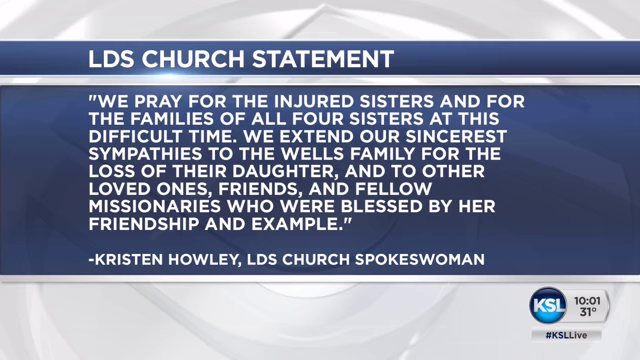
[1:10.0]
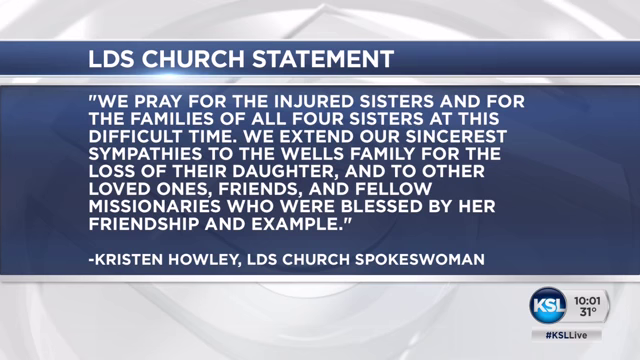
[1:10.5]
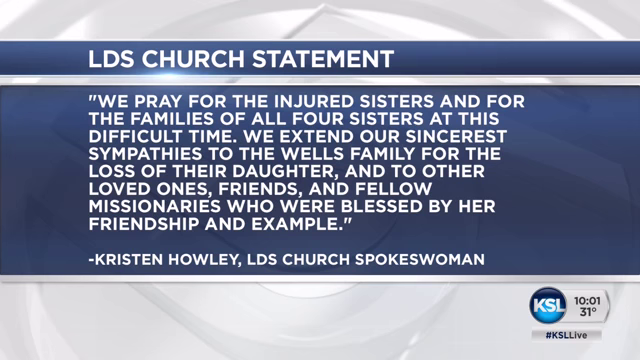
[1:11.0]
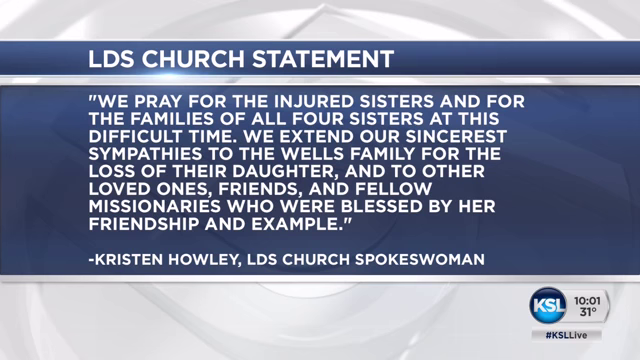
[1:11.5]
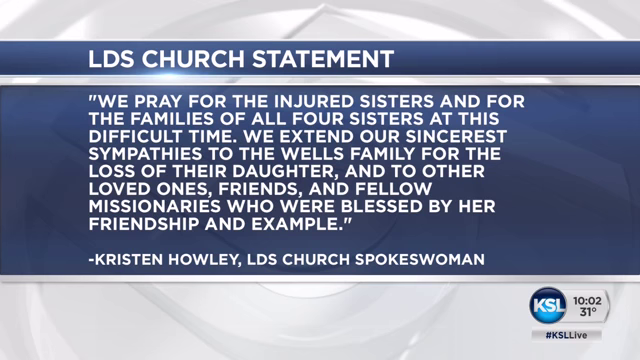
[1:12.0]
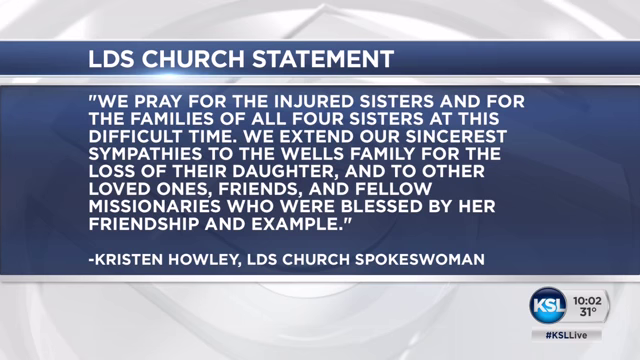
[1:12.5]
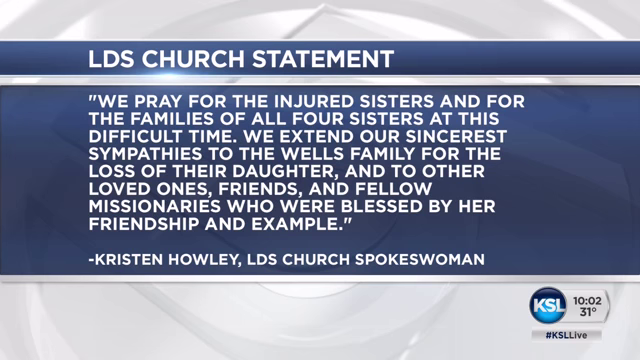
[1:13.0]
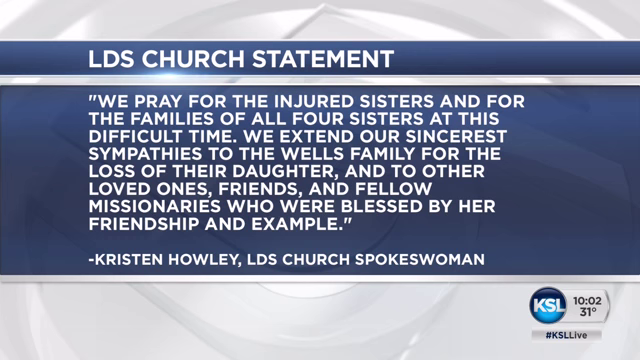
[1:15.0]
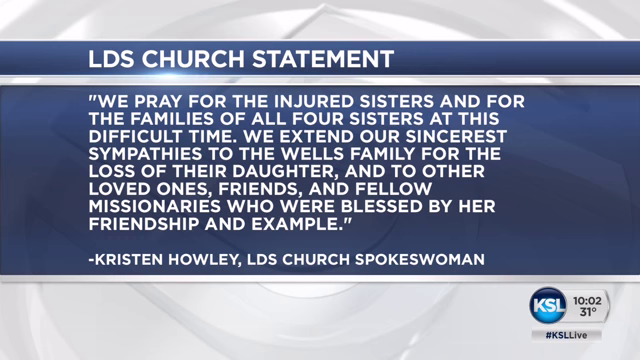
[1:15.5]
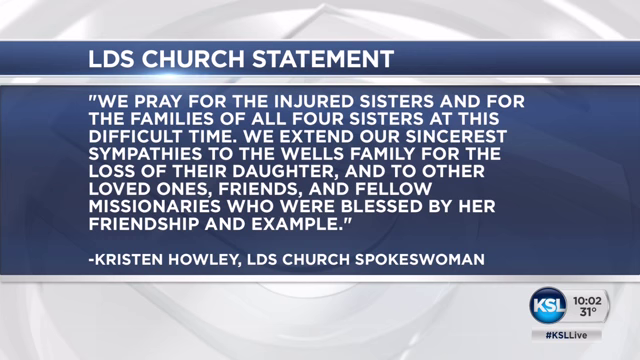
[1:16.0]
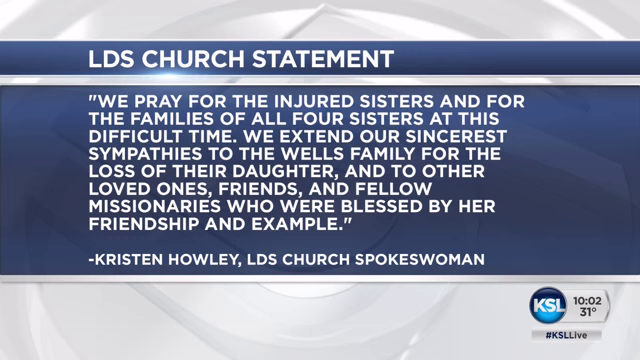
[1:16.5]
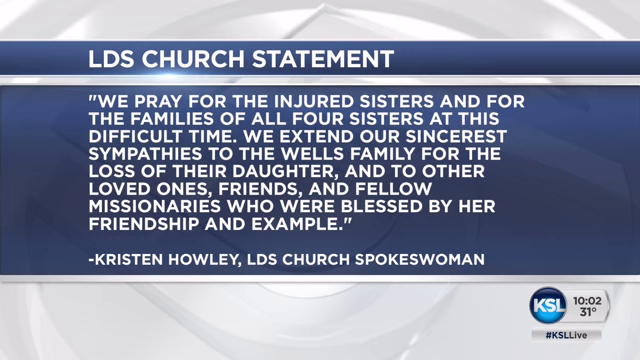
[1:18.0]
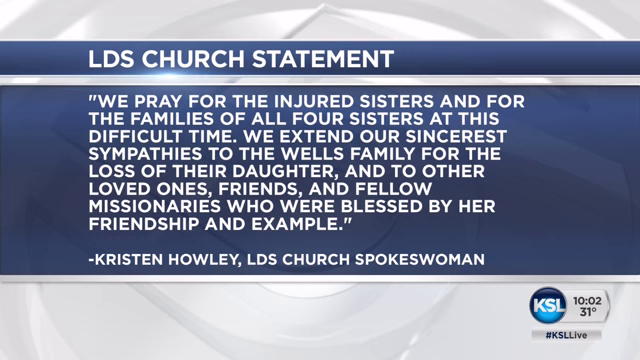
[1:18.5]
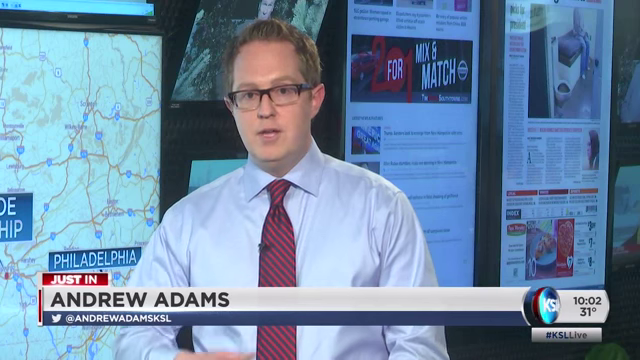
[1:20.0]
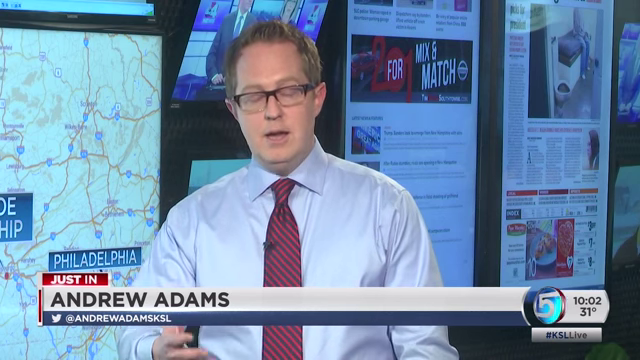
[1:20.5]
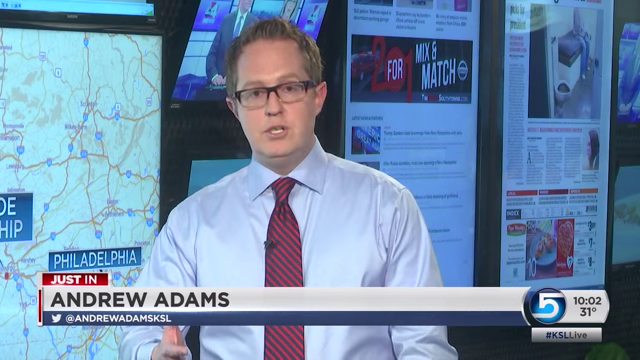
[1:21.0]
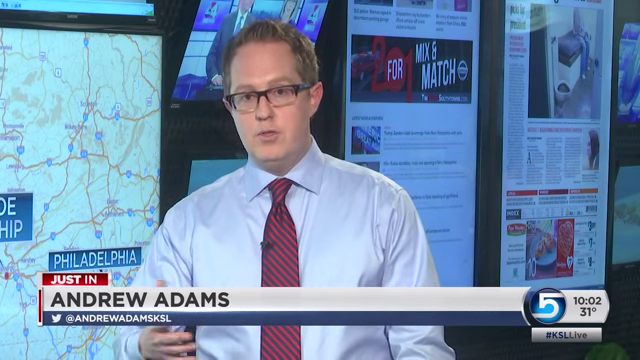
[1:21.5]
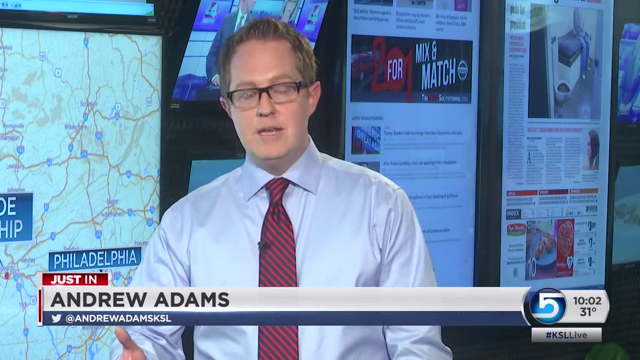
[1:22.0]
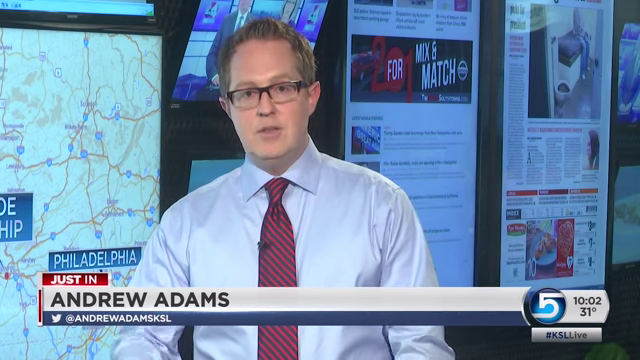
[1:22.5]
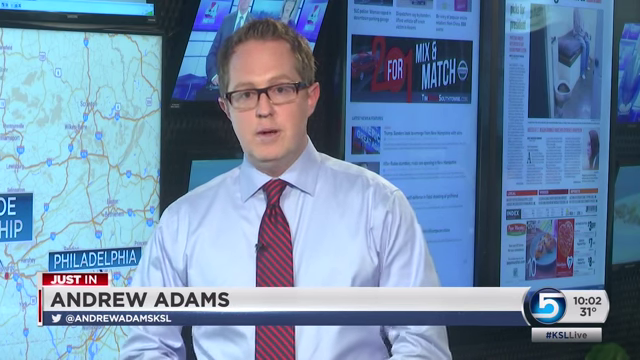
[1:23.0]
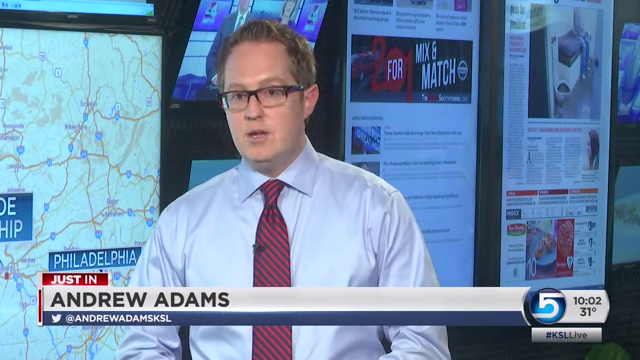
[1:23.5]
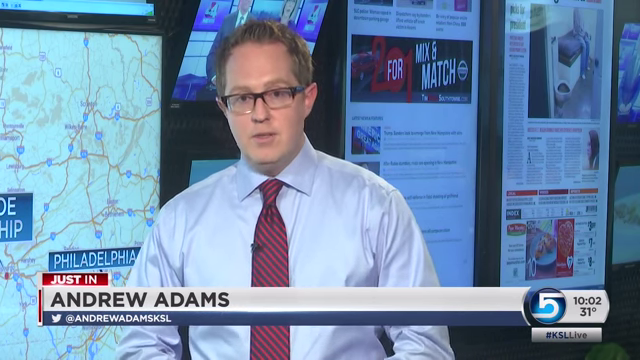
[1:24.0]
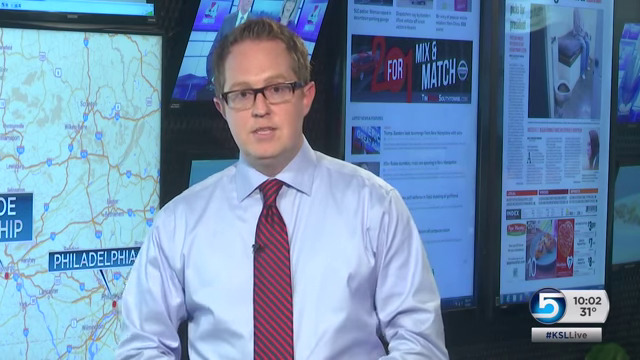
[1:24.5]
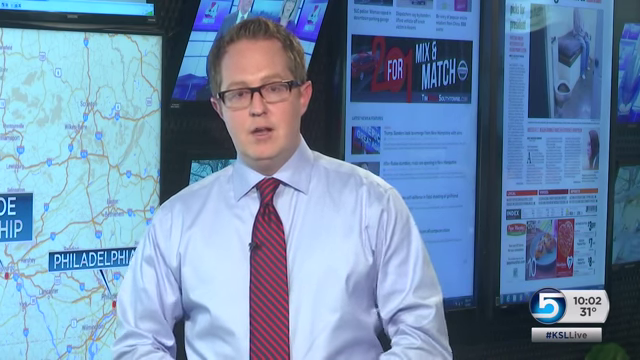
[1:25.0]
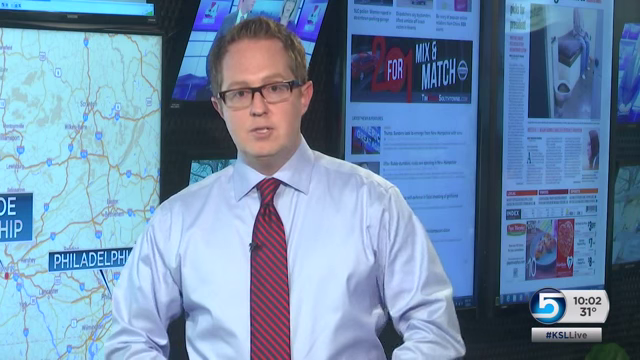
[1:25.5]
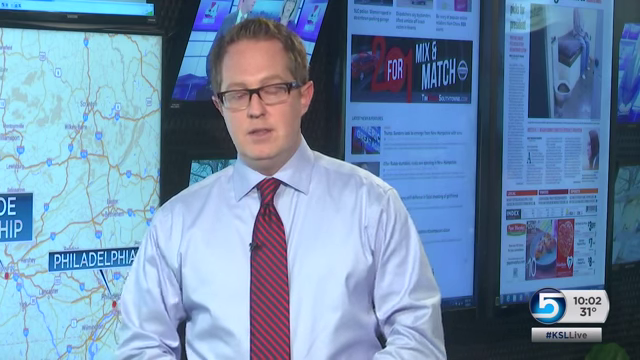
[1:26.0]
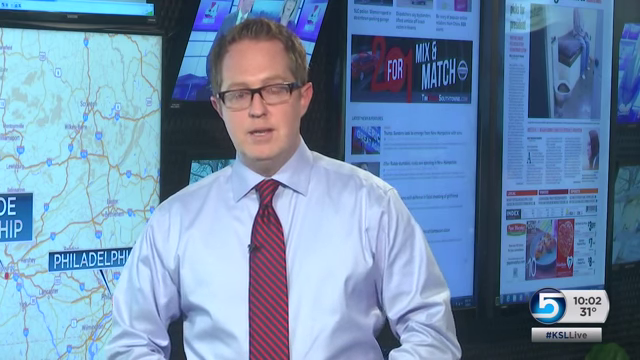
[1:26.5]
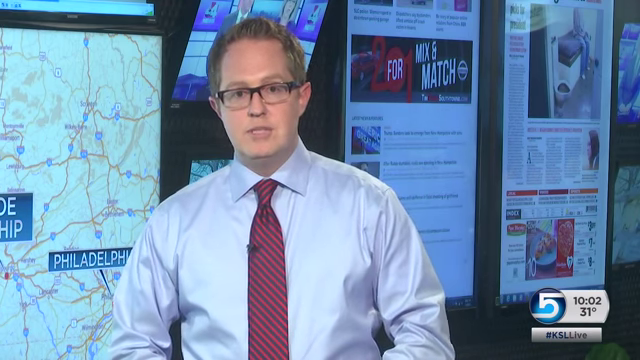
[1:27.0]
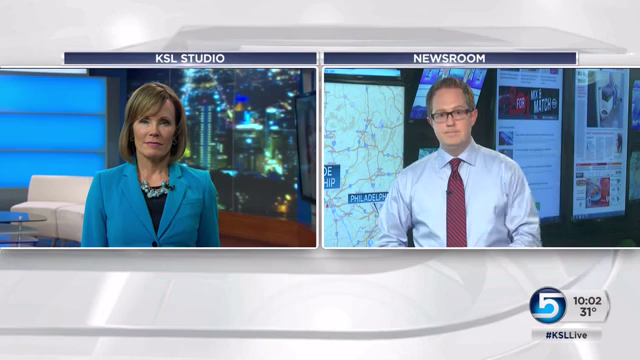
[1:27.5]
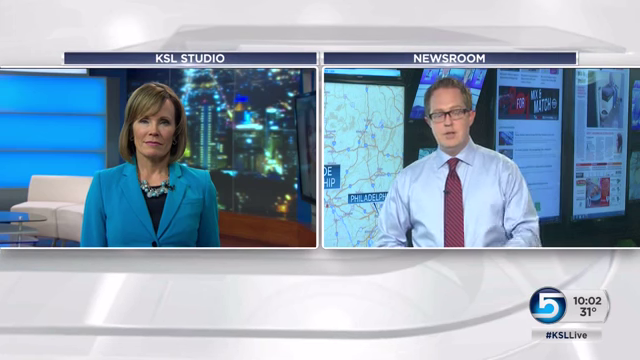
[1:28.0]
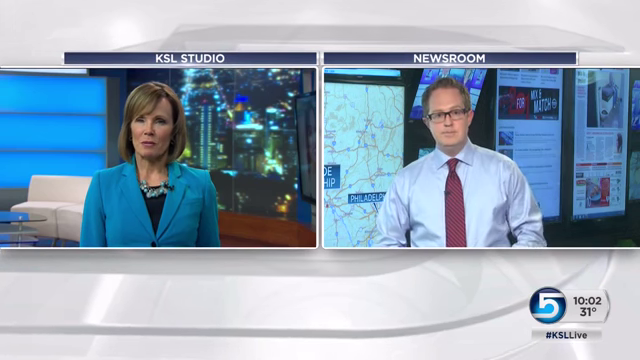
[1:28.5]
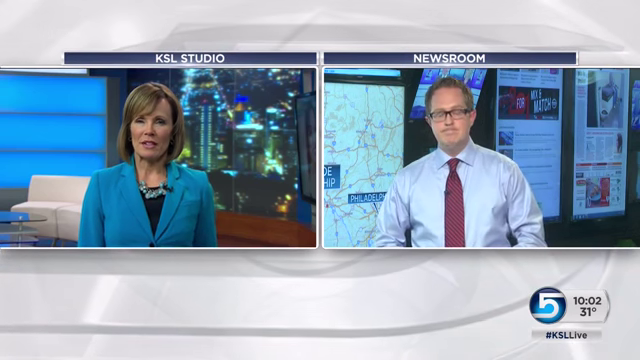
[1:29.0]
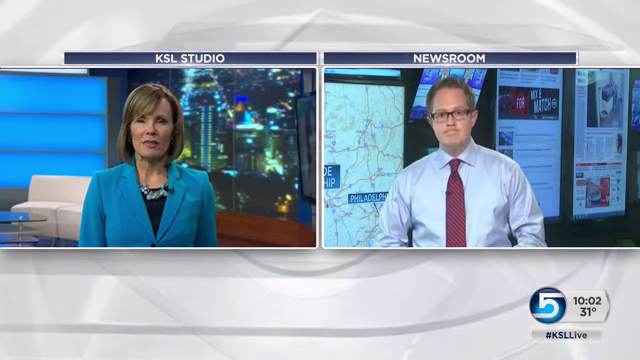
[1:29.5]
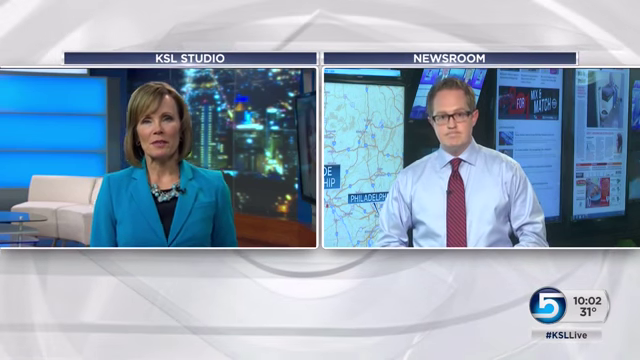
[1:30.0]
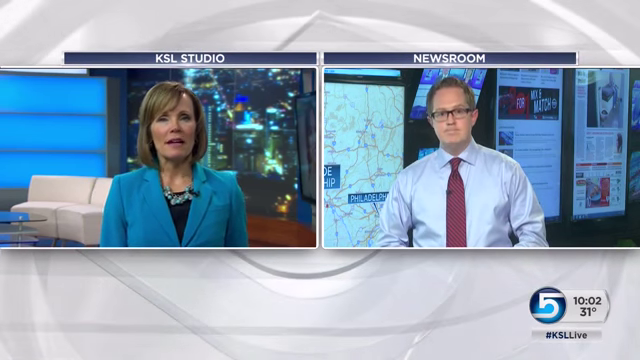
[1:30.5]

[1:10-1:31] A statement from the LDS Church is shown, reading "We pray for the injured sister and for the families of all four sisters at this difficult time we extend our sincerest sympathies" and continuing with sympathies for the family for the loss of their daughter and for other loved ones, friends and fellow missionaries. At the bottom it says the quote is from "Kristen Howley LDS Church spokeswoman." The statement stays on screen for several seconds, with a KSL logo at the bottom. The video then cuts back to Andrew Adams, who talks to the camera and kind of gestures with his hands, his arms moving back and forth in and out of the frame. It then cuts to a split screen with the female news anchor from the beginning on the left and the man on the right; text at the top says "KSL studio" over her head and "newsroom" over his head. The woman begins speaking to him, and they kind of nod.